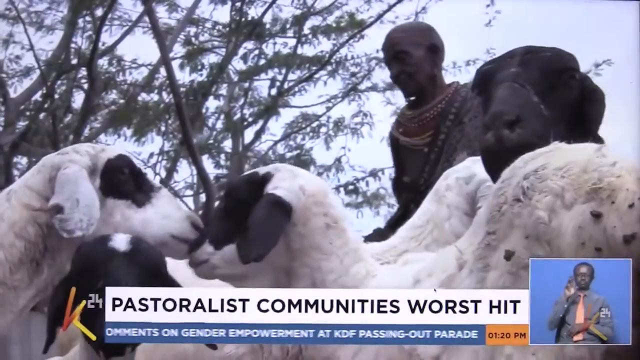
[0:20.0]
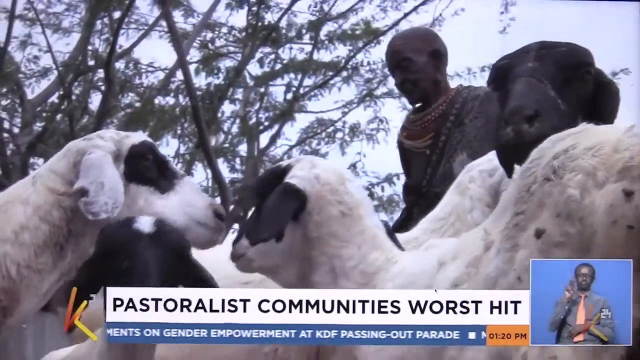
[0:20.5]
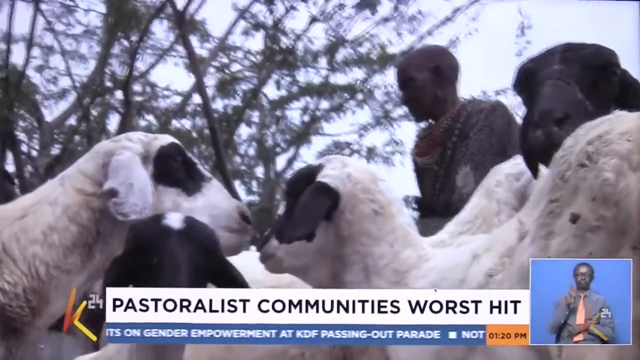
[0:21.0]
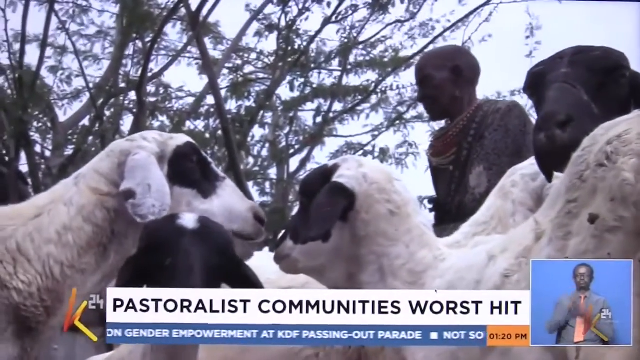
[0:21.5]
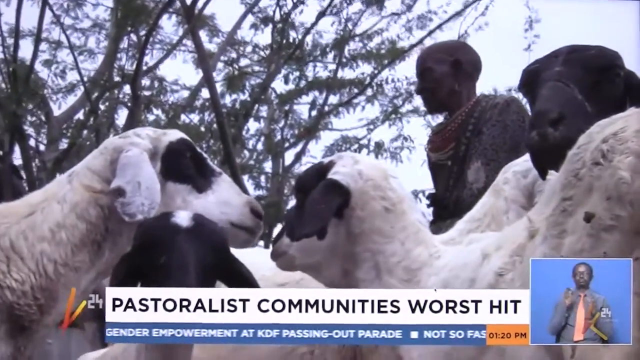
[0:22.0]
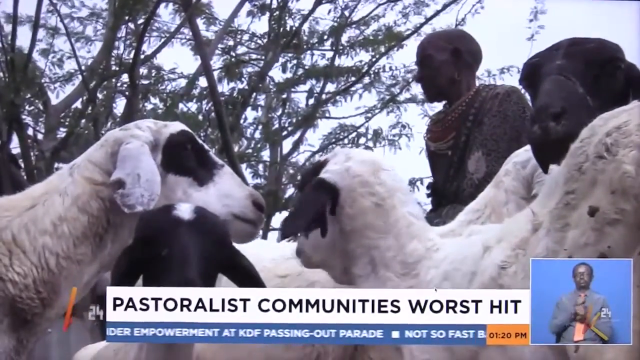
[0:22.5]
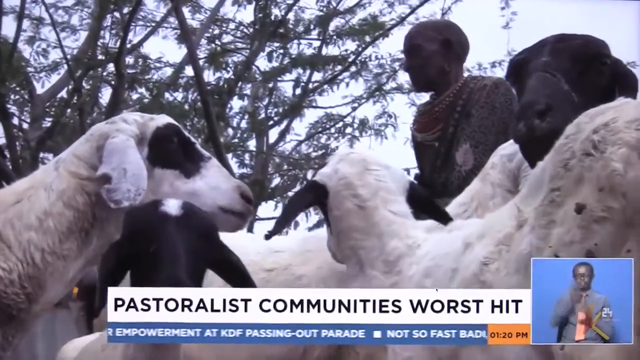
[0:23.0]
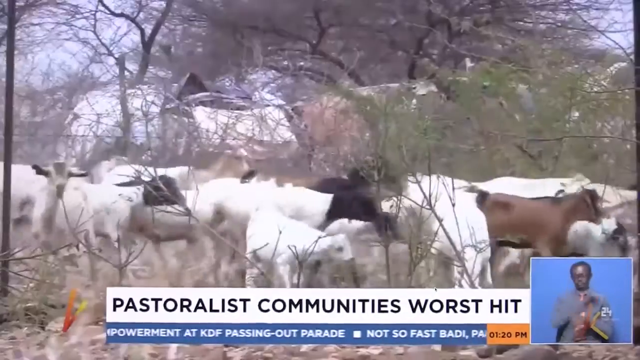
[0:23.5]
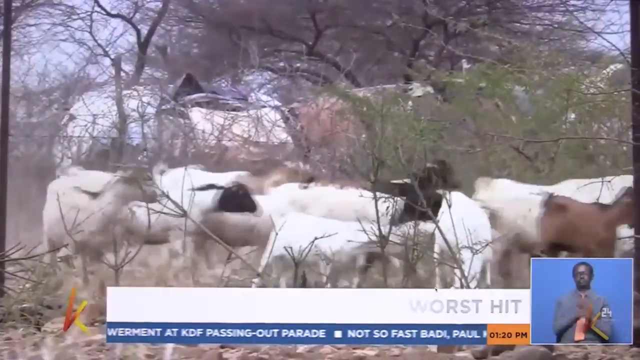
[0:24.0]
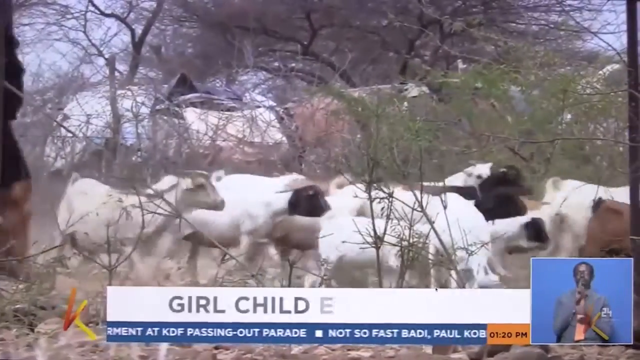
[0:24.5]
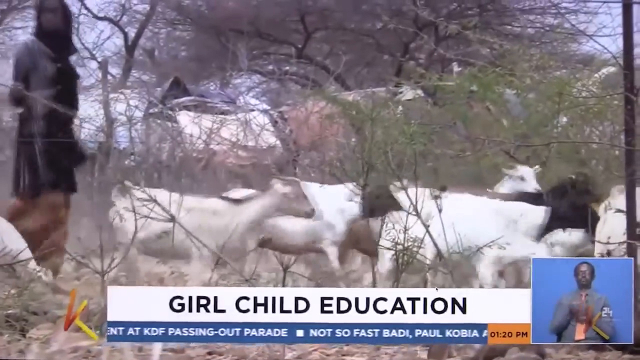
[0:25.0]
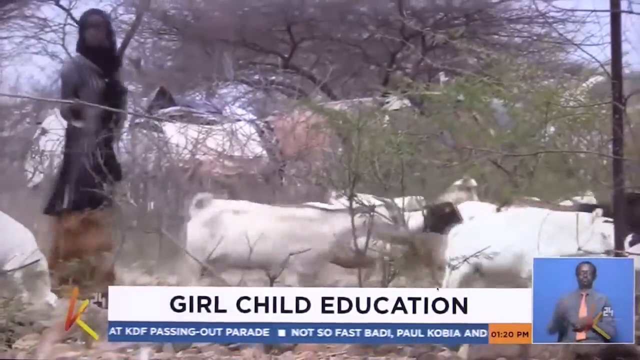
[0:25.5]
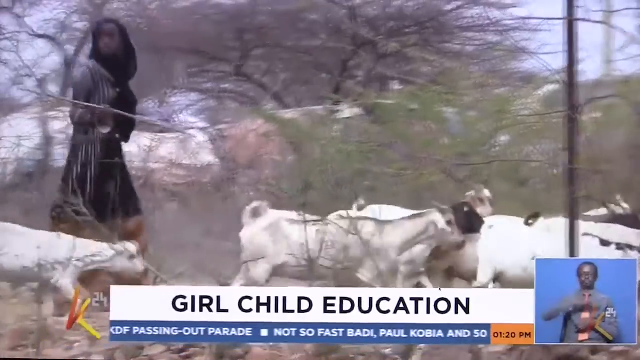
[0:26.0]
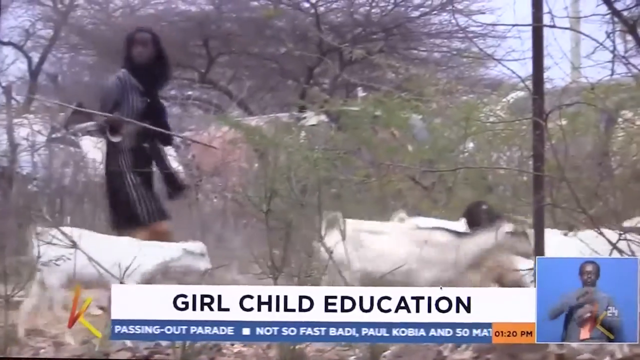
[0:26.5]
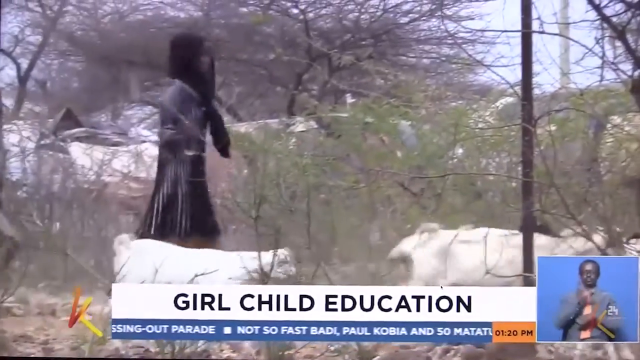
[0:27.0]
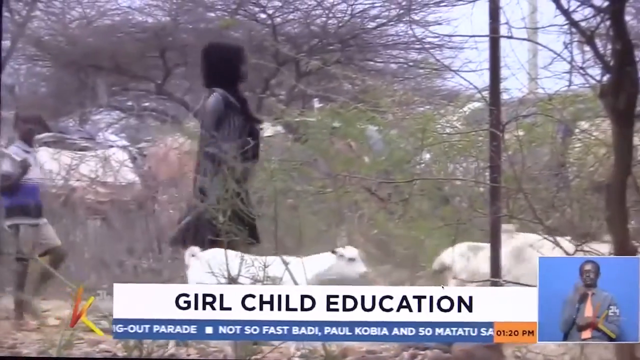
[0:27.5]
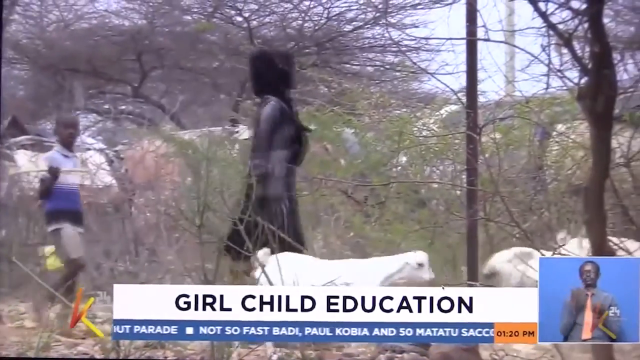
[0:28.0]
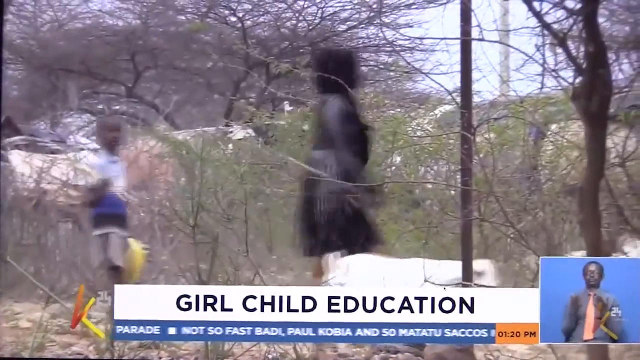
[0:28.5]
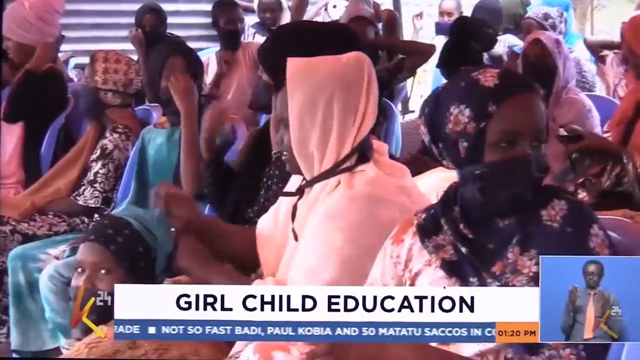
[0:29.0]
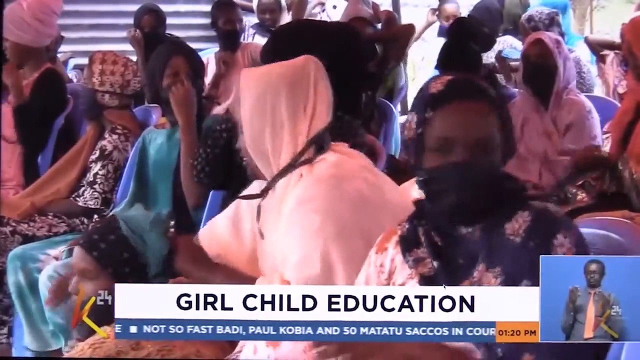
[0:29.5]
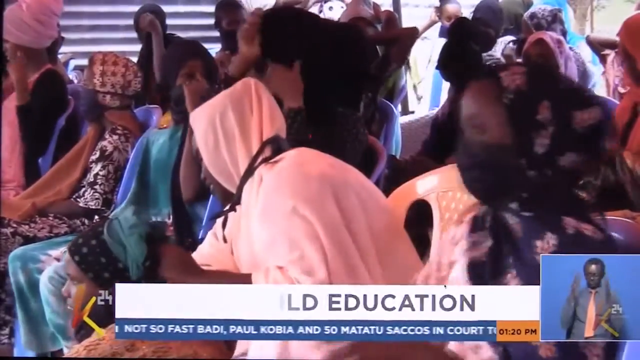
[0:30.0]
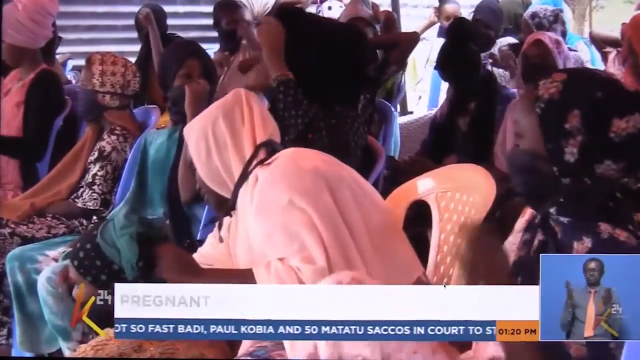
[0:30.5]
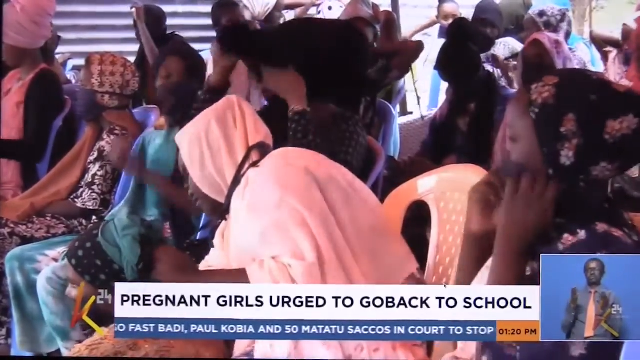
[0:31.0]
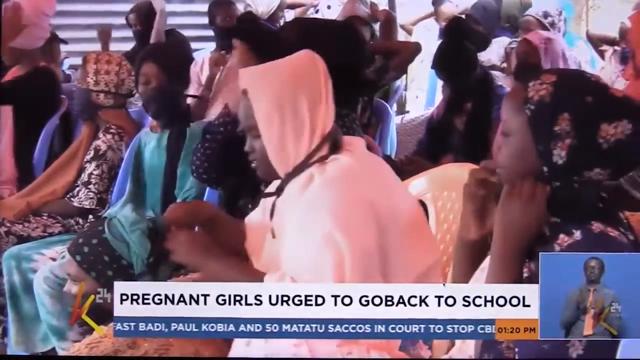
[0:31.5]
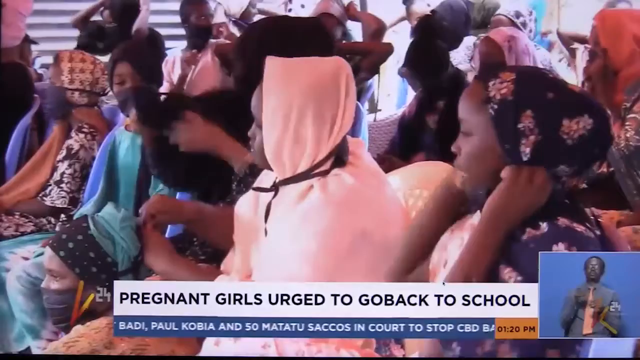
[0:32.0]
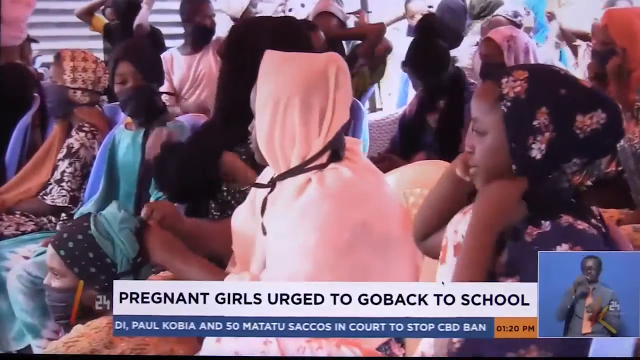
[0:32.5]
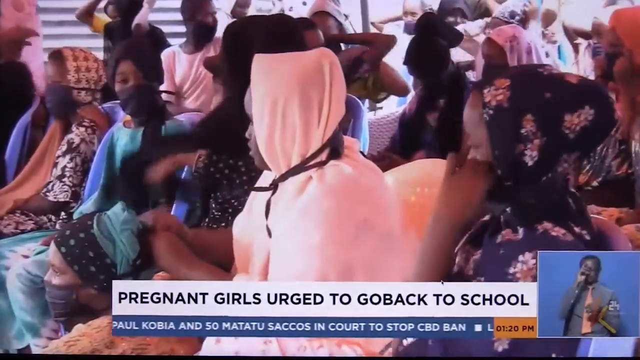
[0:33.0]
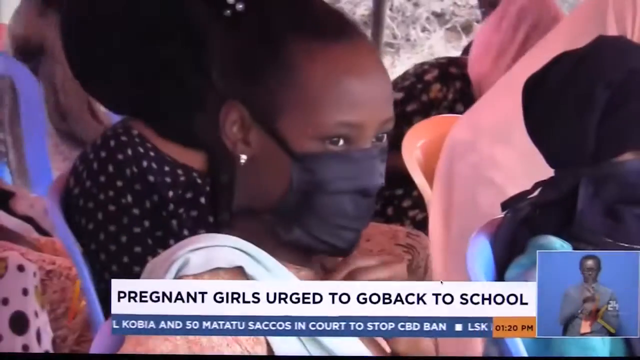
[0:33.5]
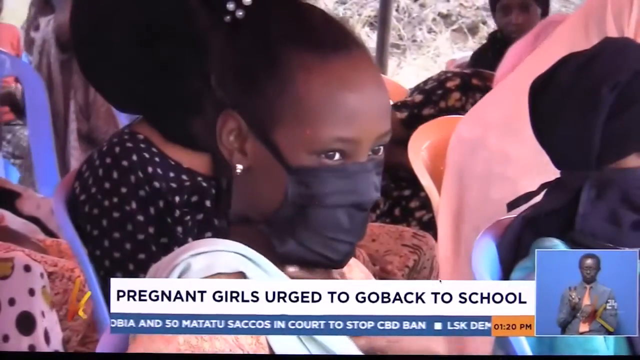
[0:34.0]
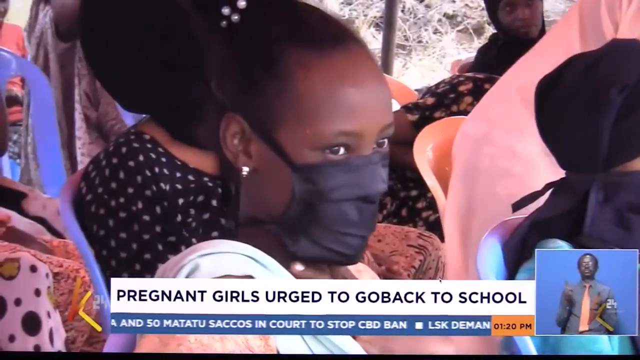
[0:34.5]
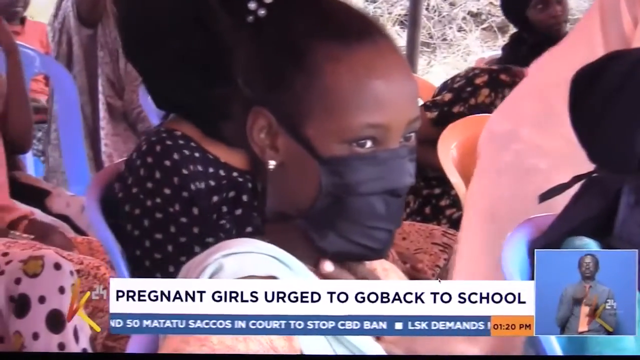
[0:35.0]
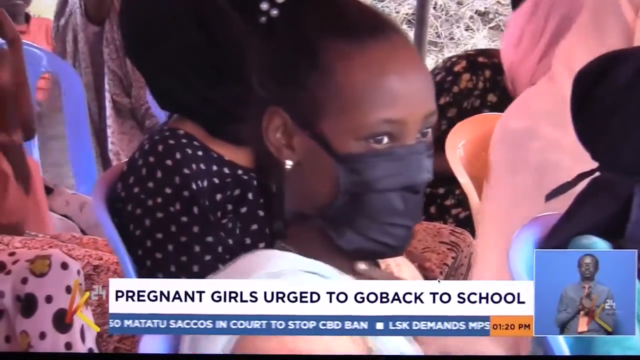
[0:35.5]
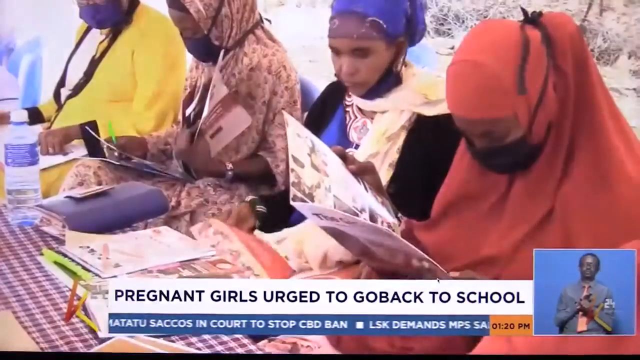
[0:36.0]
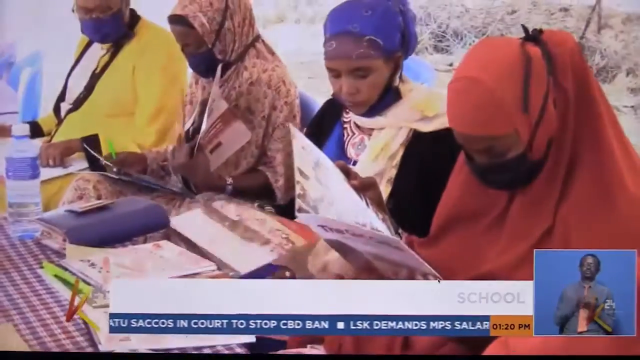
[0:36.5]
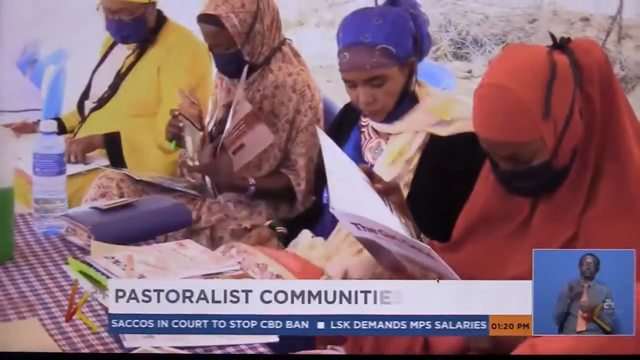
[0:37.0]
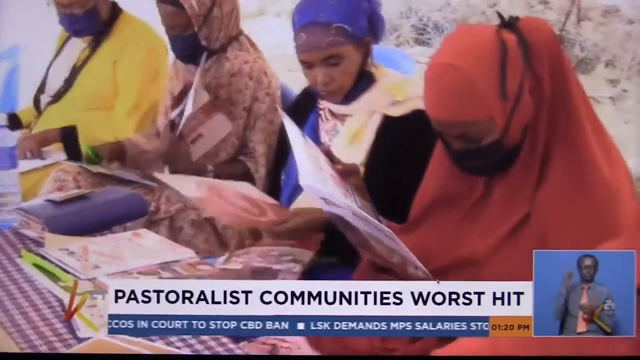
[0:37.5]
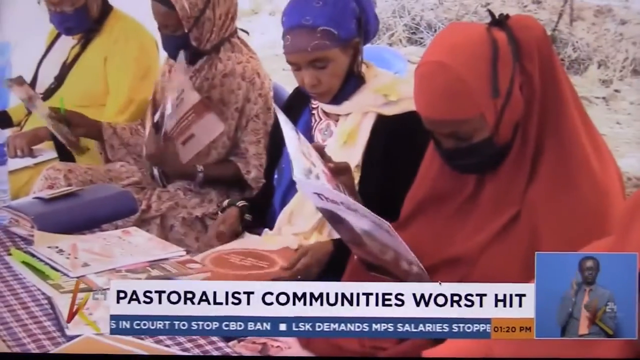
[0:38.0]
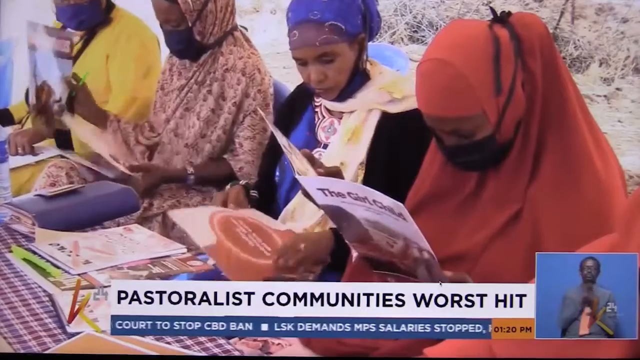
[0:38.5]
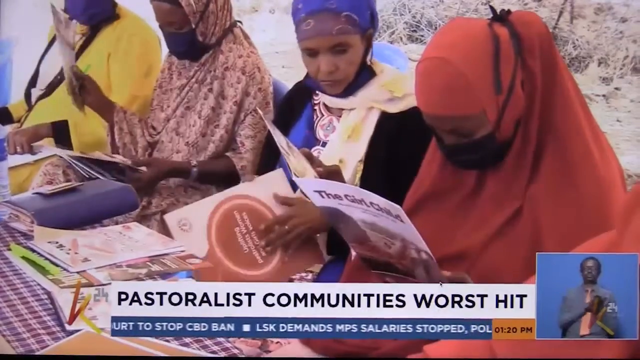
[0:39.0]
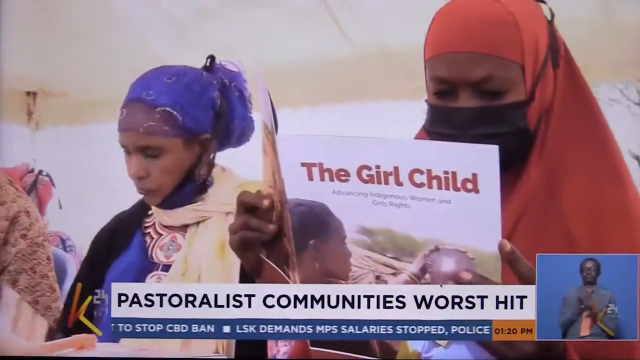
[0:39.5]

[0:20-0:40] At the bottom of the screen a man gives sign language against a blue background; he has dark skin, wears a grey shirt and maybe an orange or pink tie, and appears to be wearing glasses. The main video shows someone from the pastoralist community: a quite thin, somewhat older man with a shaved head and dark skin. He is surrounded by three sheep or goats; one on the right of the screen has a black face, and there is perhaps another of these animals in the background. Further behind him is a tree, with the sky visible through it. Another sheep appears, and someone is kind of chewing. A herd of sheep then runs to the right of the screen, with a pastoralist following behind them and a young boy behind that adult. The words "Girl Child Education" appear at the bottom of the screen. A number of females are shown, one with her hair covered, sitting on plastic chairs facing the left of the screen. A girl is pictured wearing a Covid mask. Then four women are at some sort of desk outside; most of them have their hair covered, three wear Covid masks, and one is in a red outfit. They are reading a book called "The Girl Child".